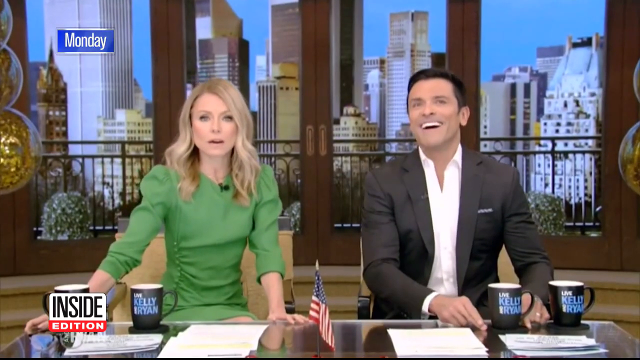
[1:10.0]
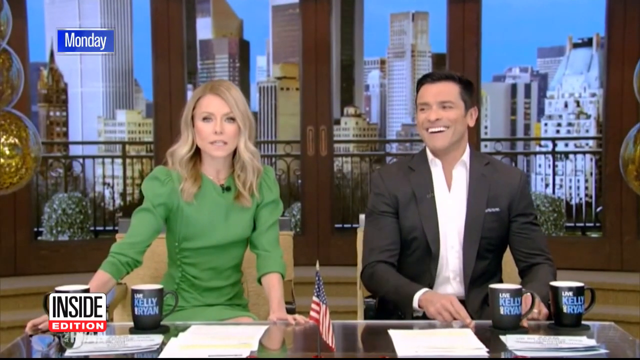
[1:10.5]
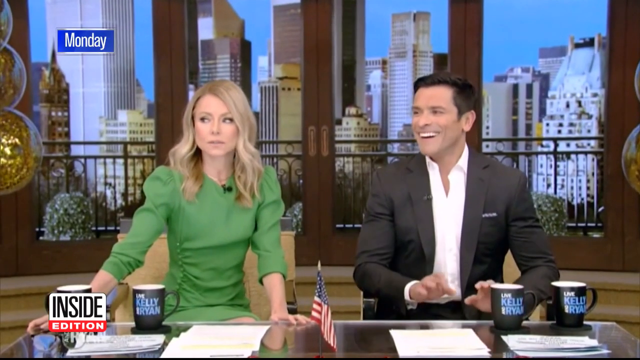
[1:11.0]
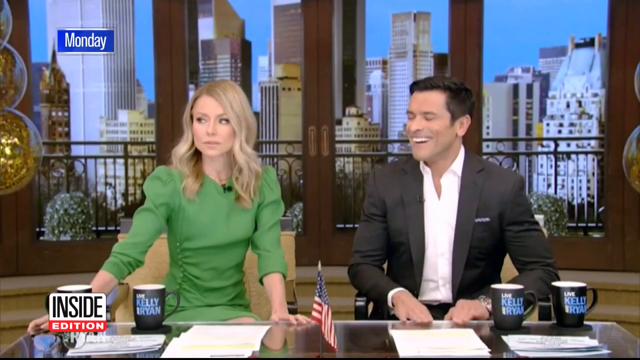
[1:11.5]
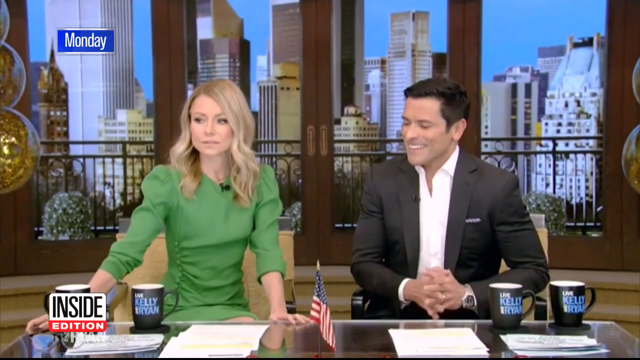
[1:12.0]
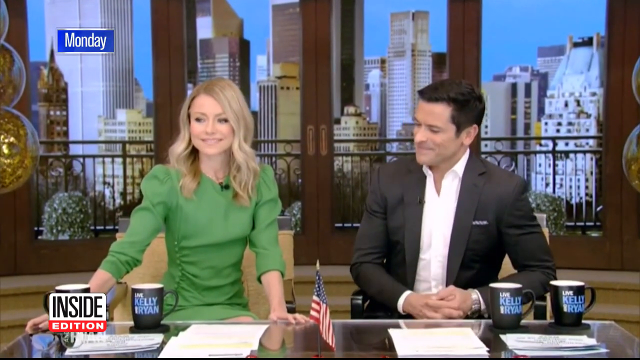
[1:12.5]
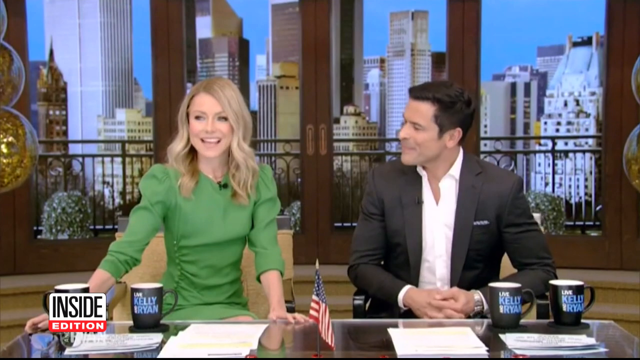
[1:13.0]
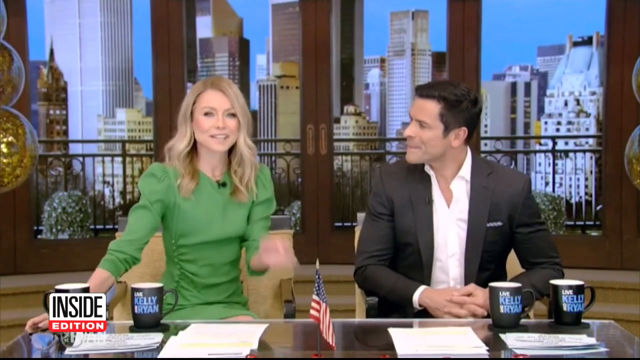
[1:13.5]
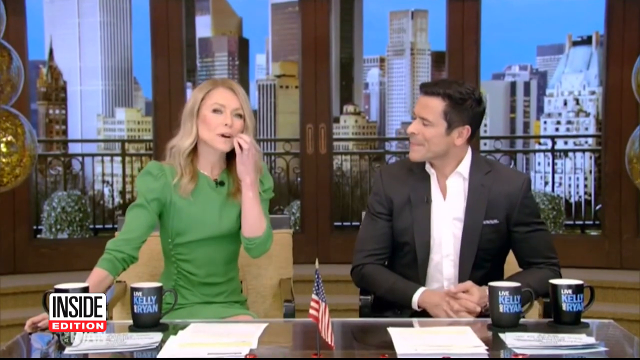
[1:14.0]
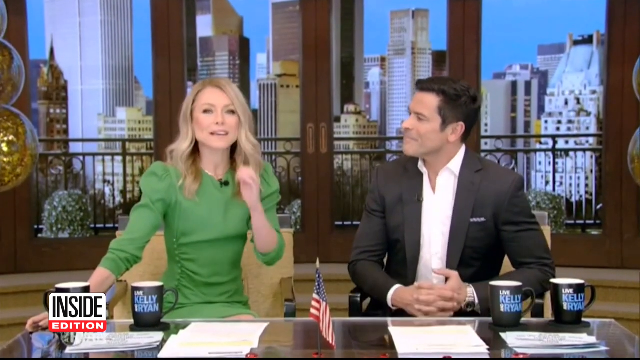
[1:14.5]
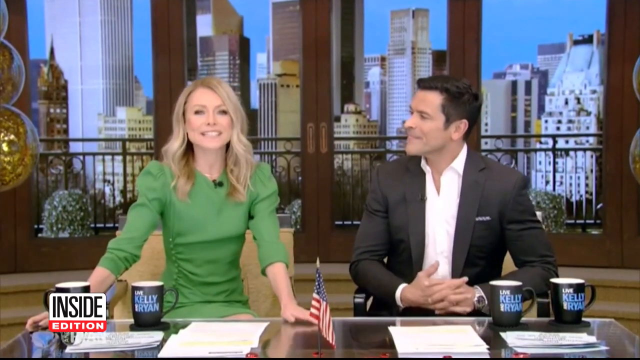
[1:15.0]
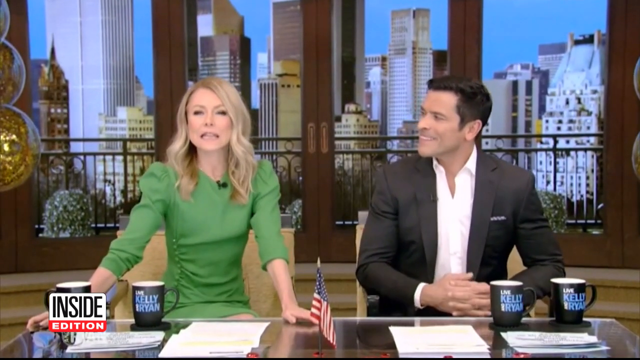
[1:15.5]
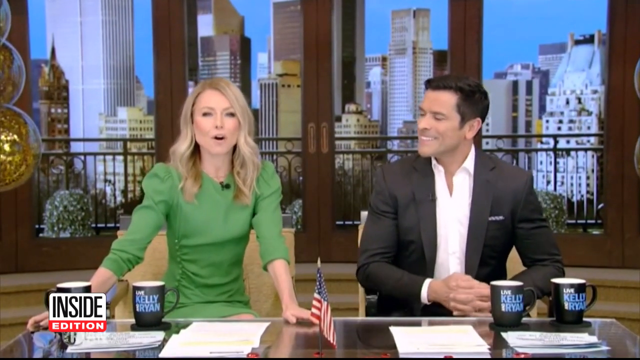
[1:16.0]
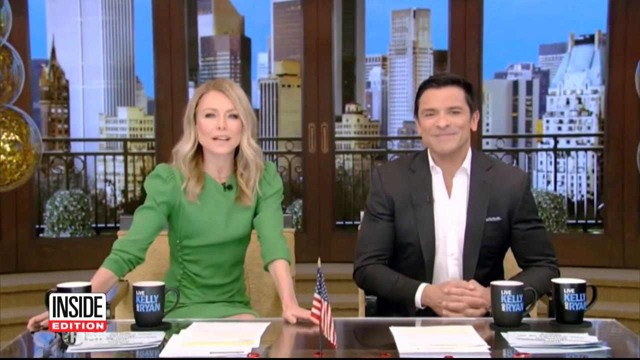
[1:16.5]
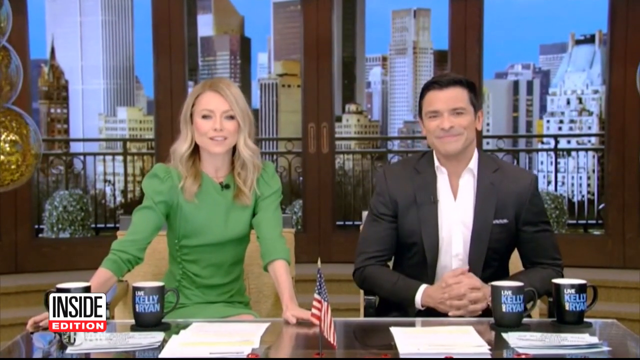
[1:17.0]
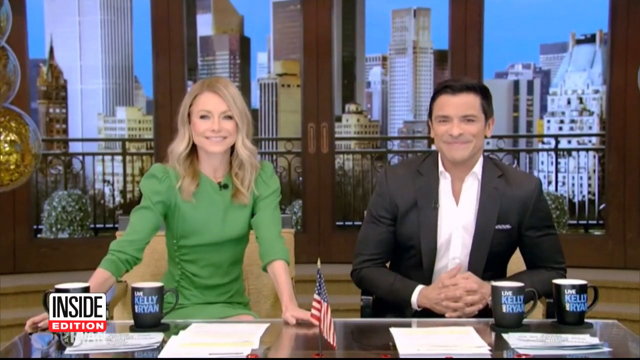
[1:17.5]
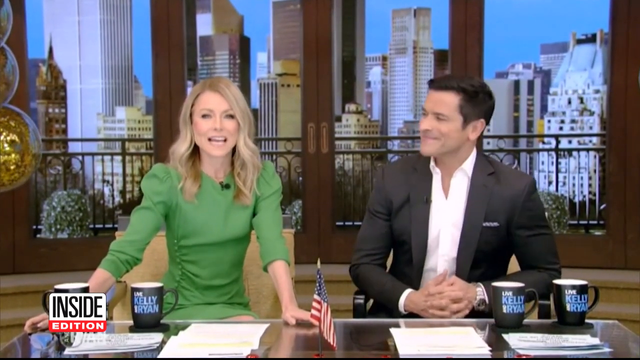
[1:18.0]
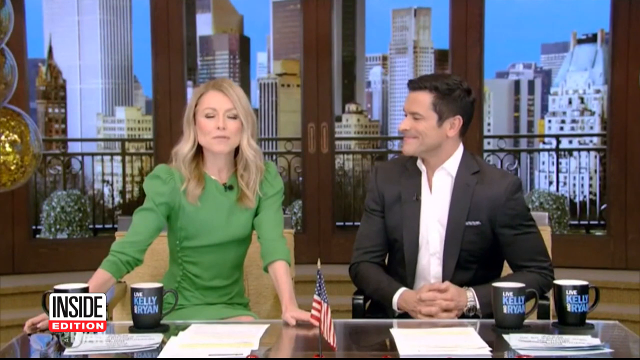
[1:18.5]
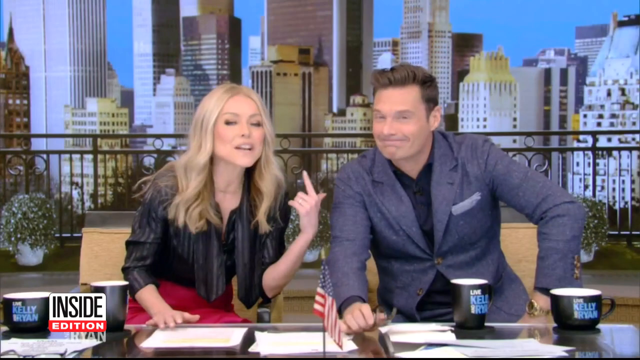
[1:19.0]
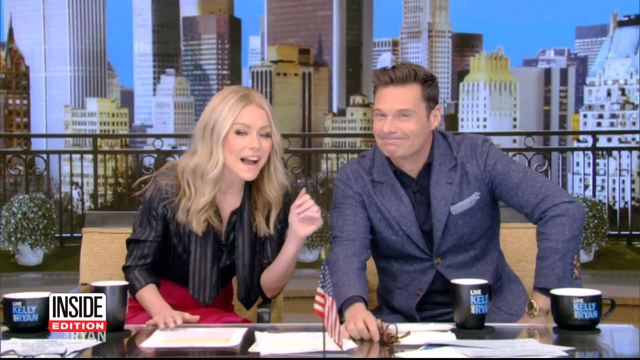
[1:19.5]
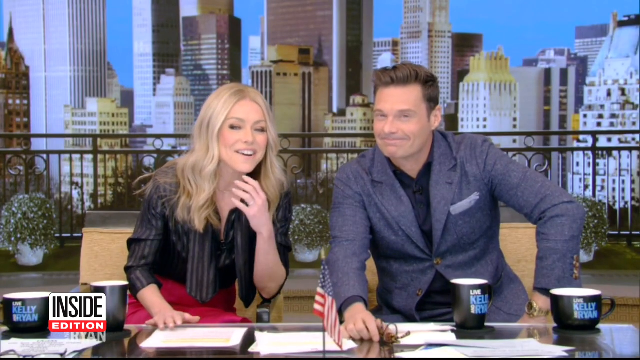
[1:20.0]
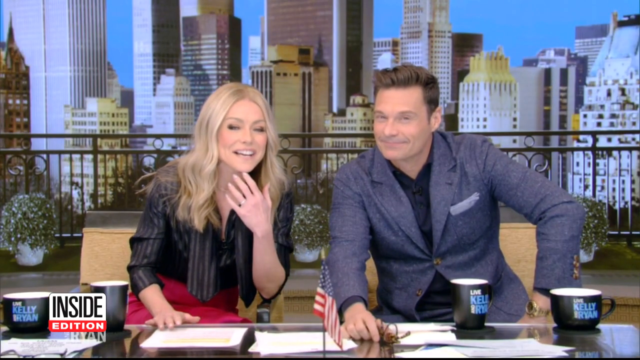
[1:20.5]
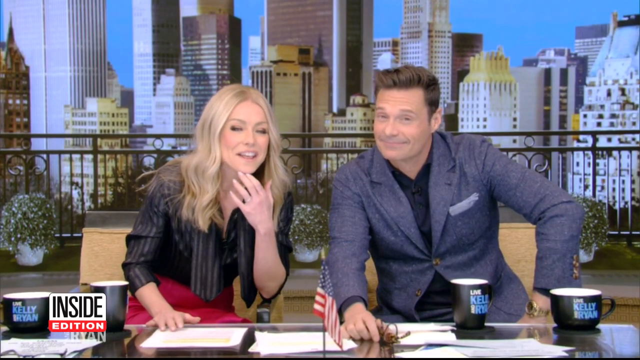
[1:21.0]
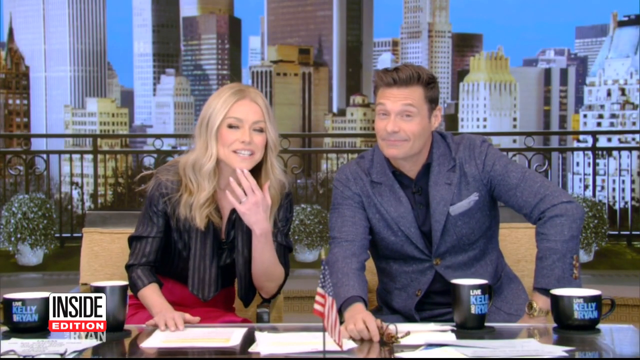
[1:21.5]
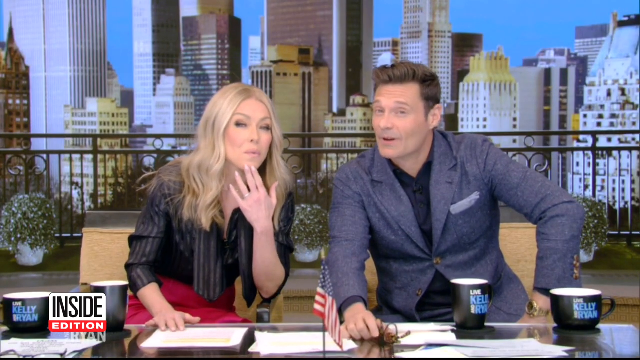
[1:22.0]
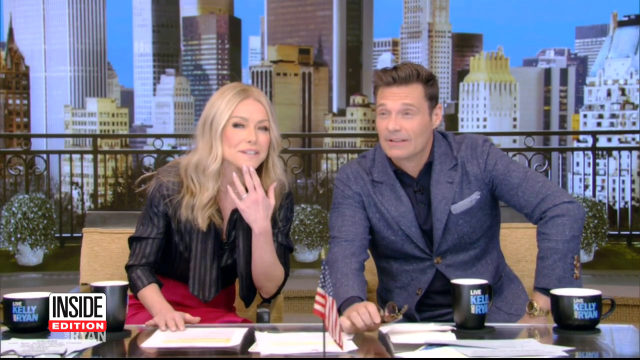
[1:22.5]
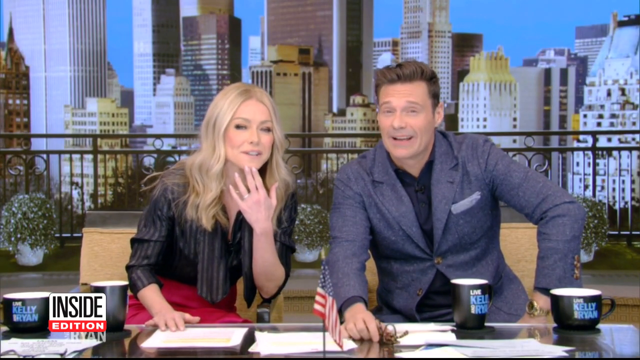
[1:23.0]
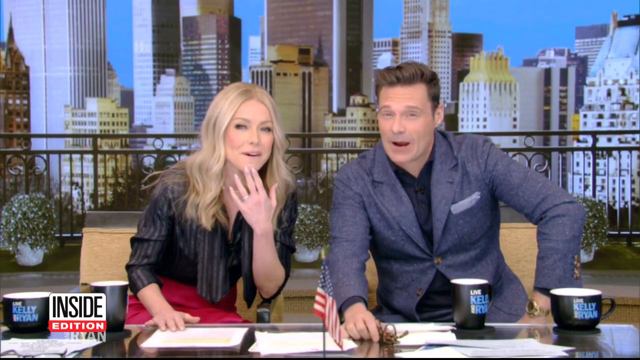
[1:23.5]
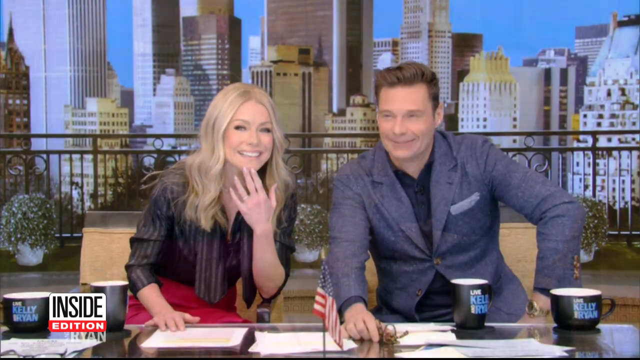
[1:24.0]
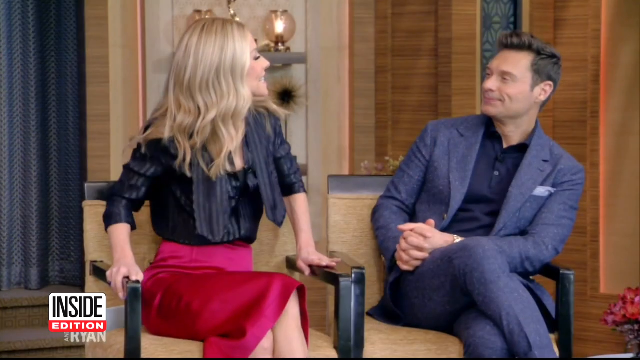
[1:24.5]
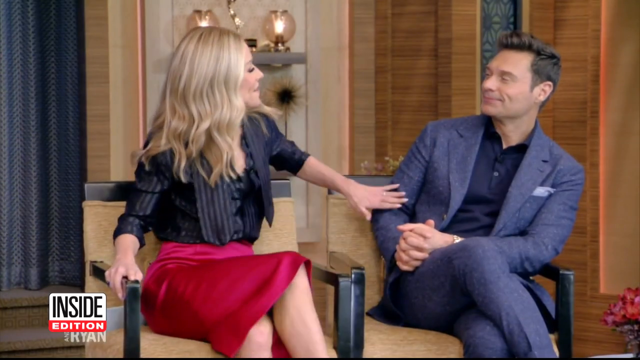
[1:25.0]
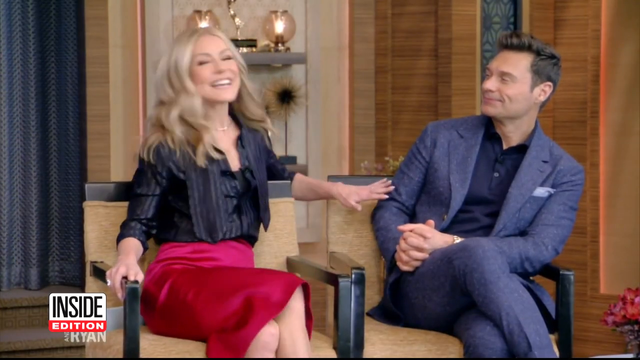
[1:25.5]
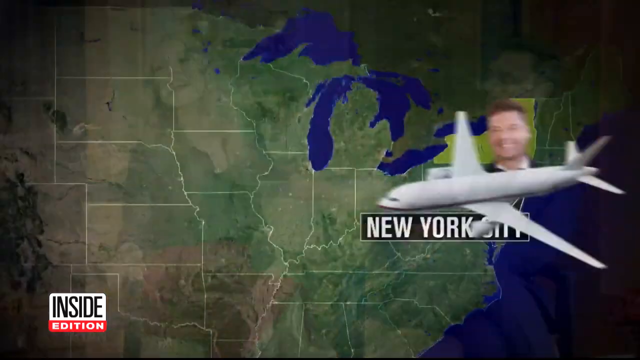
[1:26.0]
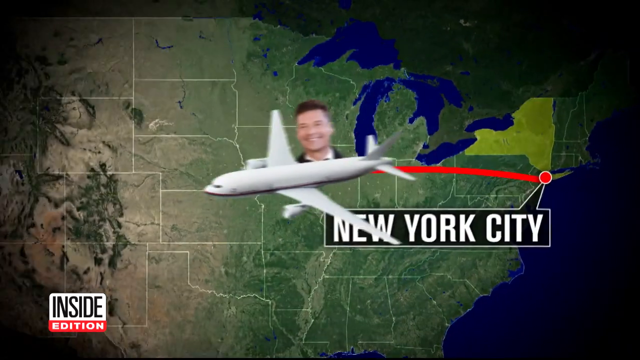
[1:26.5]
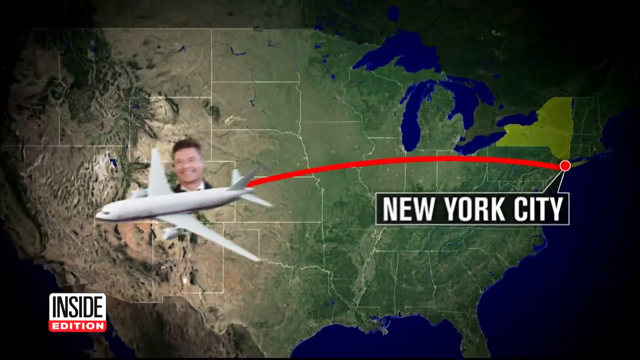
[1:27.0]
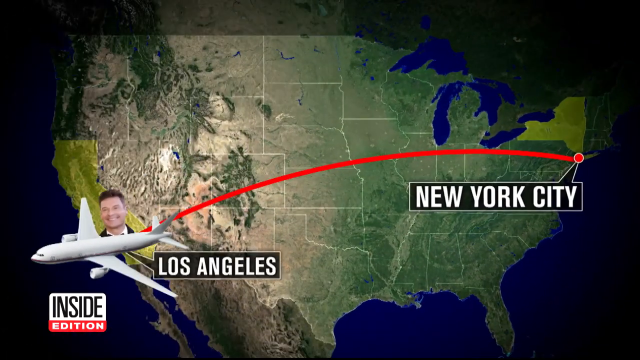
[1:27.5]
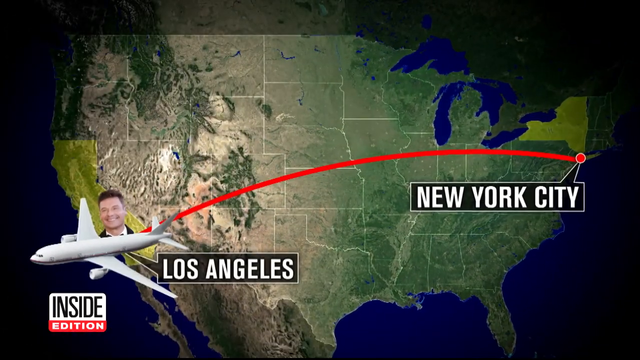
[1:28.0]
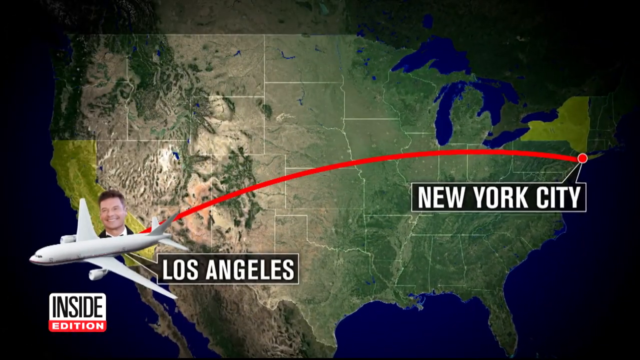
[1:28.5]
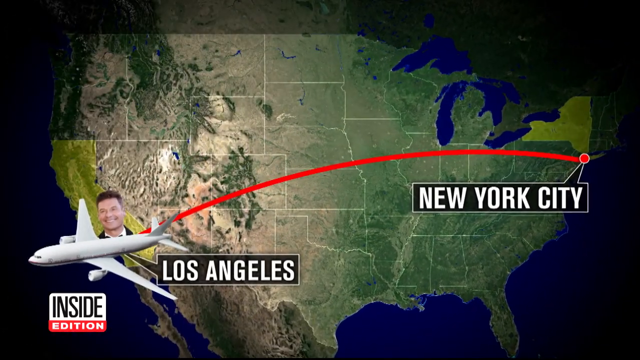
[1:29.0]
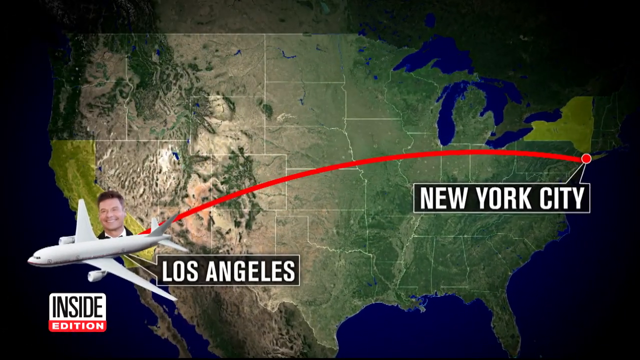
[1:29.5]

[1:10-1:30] Kelly Ripa and Mark Consuelos sit at a long glass desk on the set of the talk show, now titled Live with Kelly and Mark; Mark Consuelos appears to be replacing Ryan Seacrest as Kelly Ripa's co-host. The two speak to one another while sitting in front of the desk facing the camera or the audience. The video pans between the shot of the two of them speaking and back to Kelly Ripa and Ryan Seacrest sitting at the same desk. It then shows the two of them sitting in tall chairs, and then changes to a map of the continental United States showing an airplane with a red starting point in New York City and a picture of Ryan Seacrest's face digitally superimposed next to the plane. The plane moves in an arc, followed by a red line, across the continental United States and lands in Los Angeles, presumably where Ryan Seacrest will be relocating.